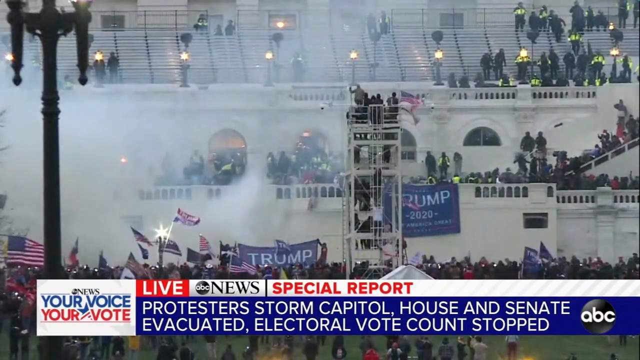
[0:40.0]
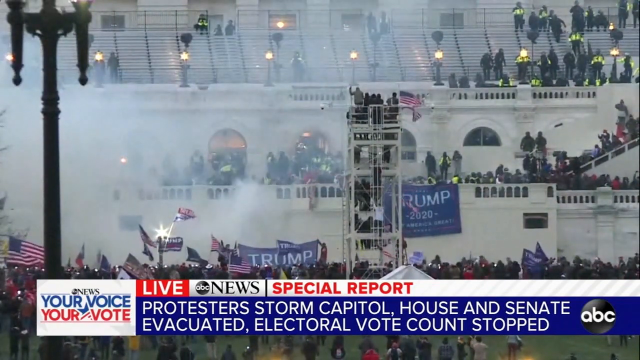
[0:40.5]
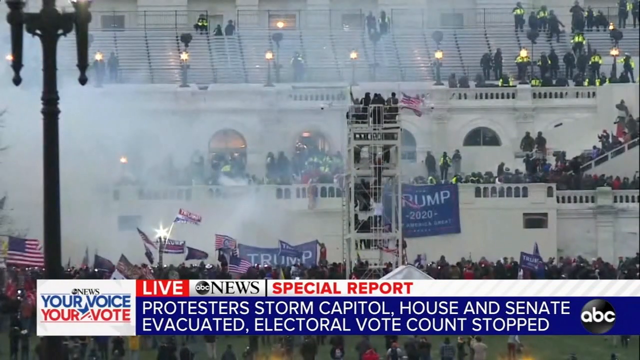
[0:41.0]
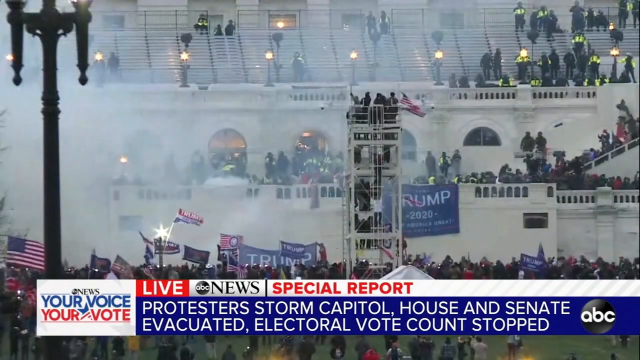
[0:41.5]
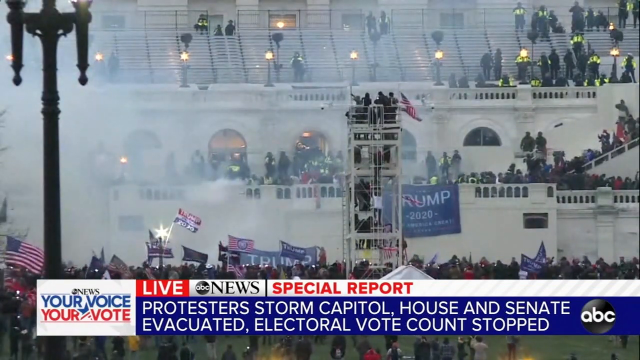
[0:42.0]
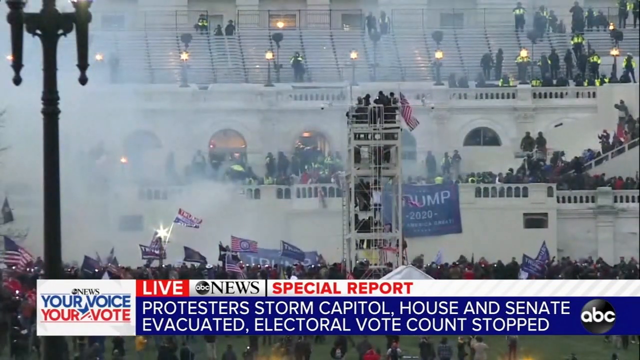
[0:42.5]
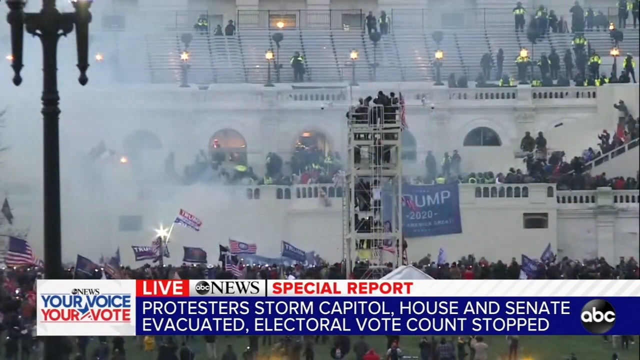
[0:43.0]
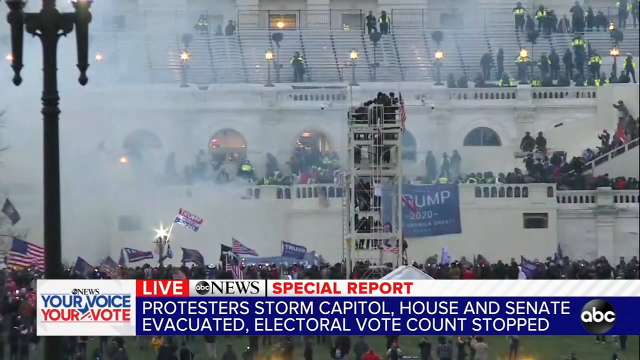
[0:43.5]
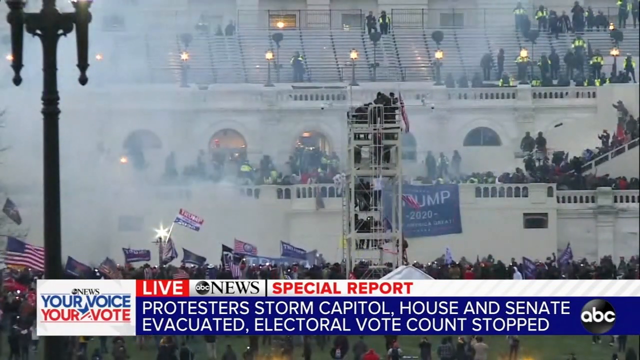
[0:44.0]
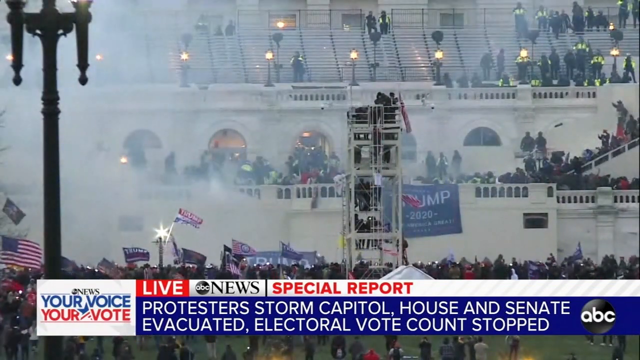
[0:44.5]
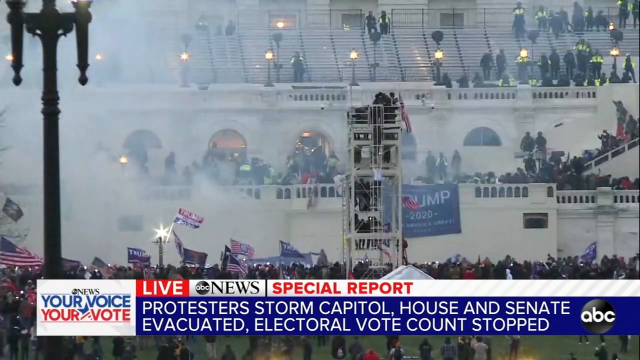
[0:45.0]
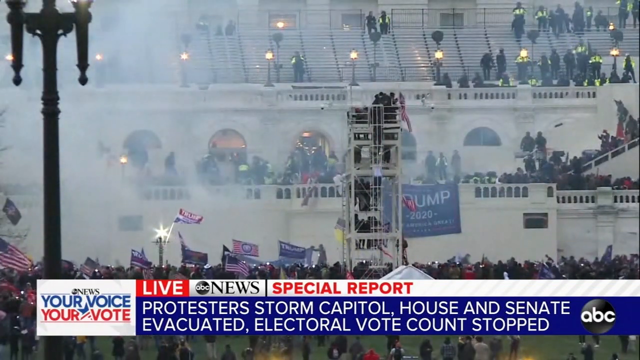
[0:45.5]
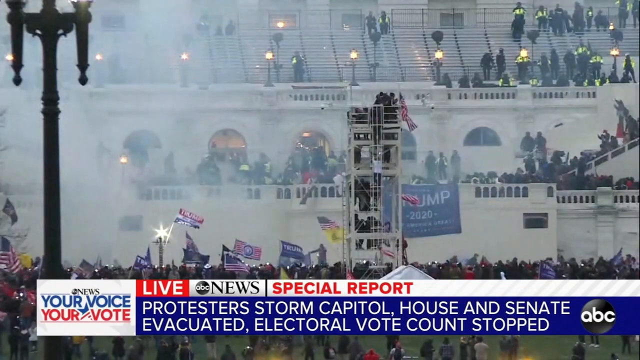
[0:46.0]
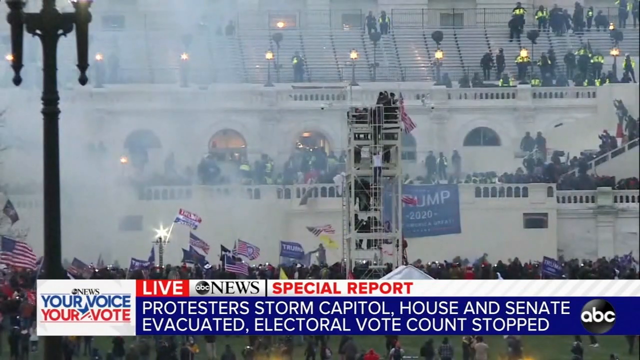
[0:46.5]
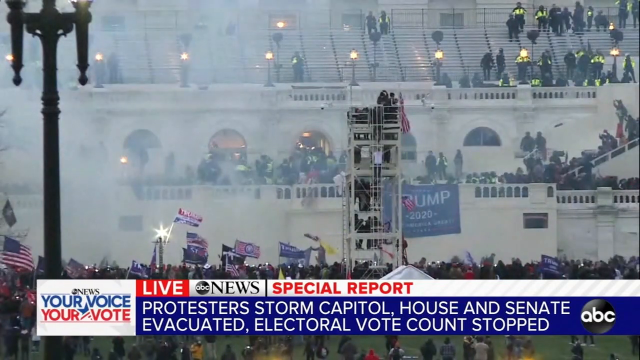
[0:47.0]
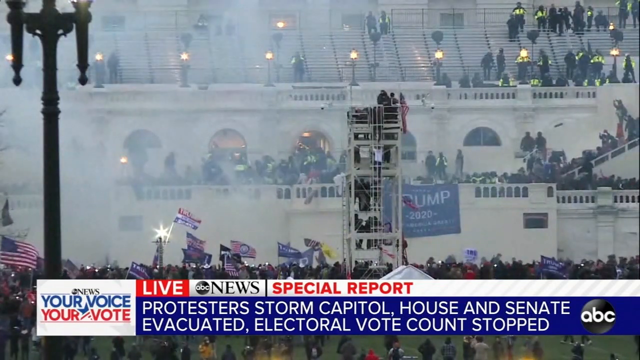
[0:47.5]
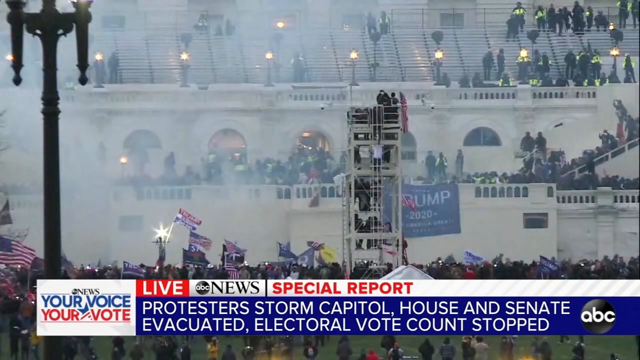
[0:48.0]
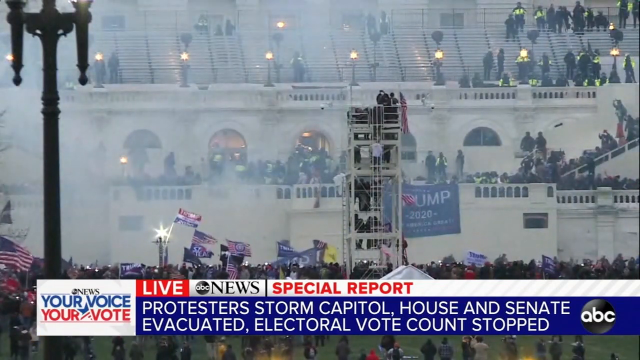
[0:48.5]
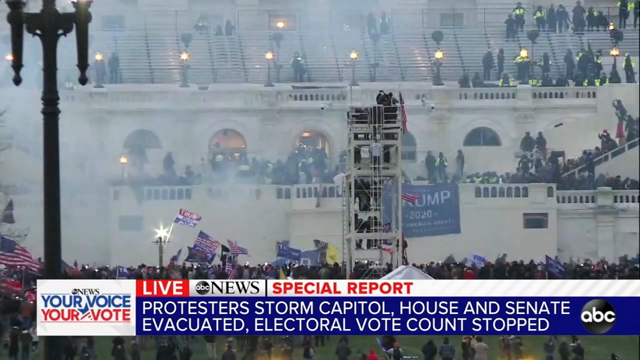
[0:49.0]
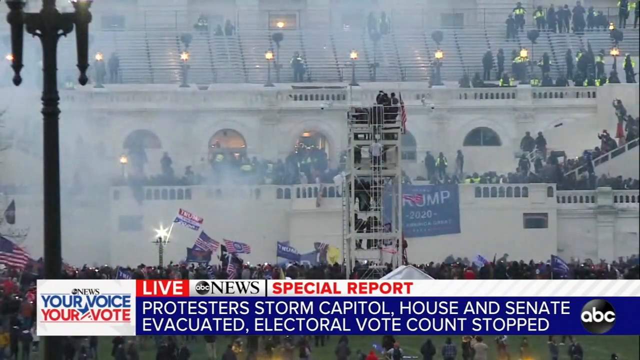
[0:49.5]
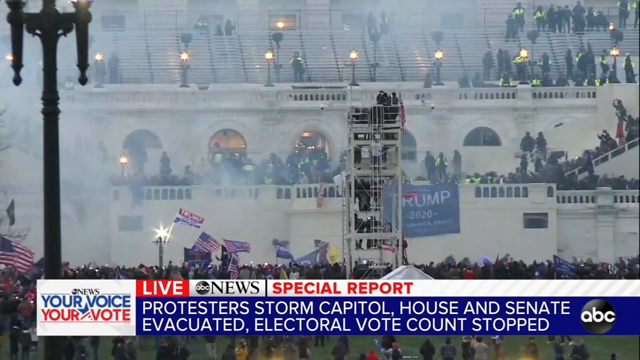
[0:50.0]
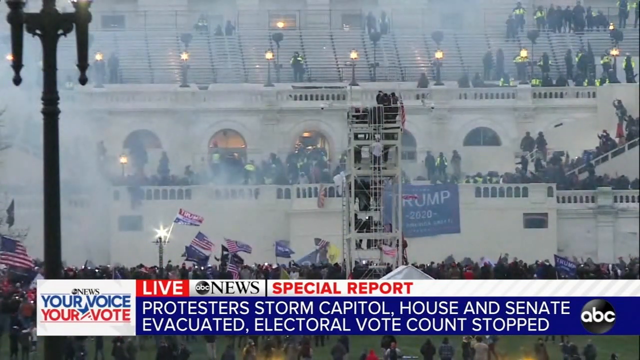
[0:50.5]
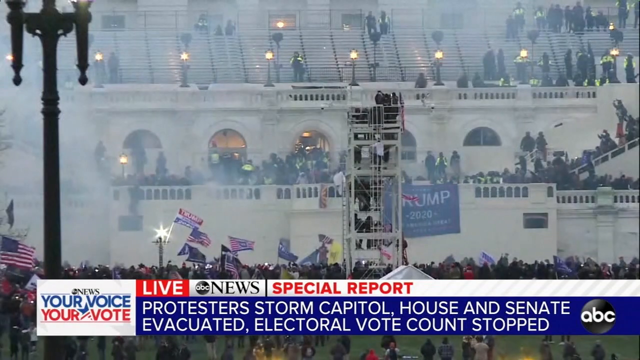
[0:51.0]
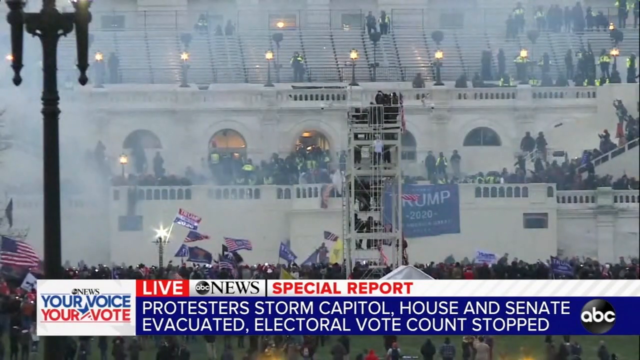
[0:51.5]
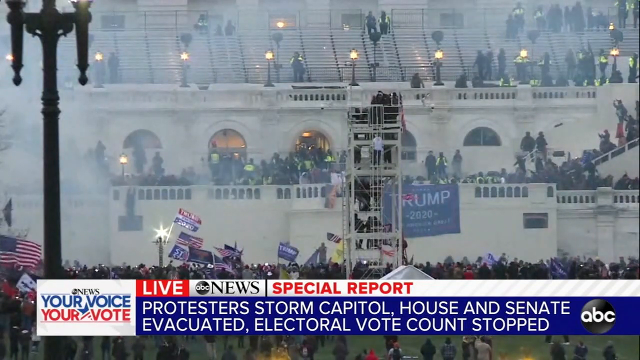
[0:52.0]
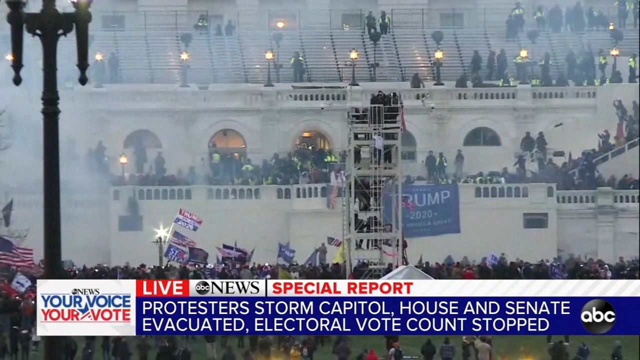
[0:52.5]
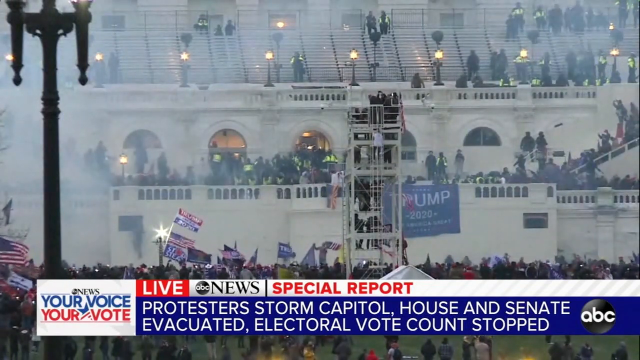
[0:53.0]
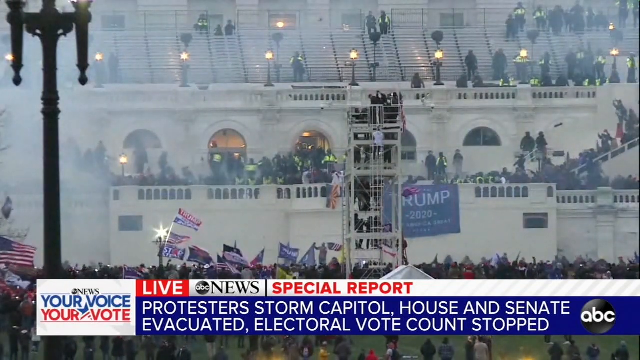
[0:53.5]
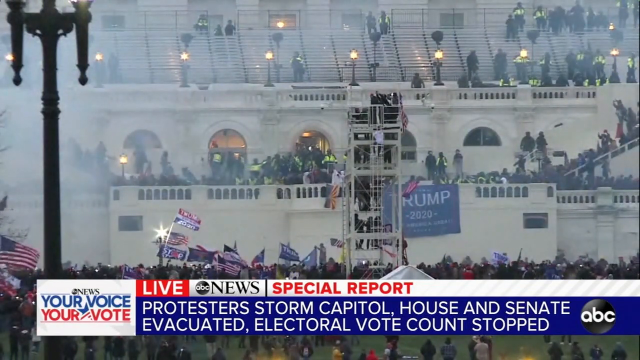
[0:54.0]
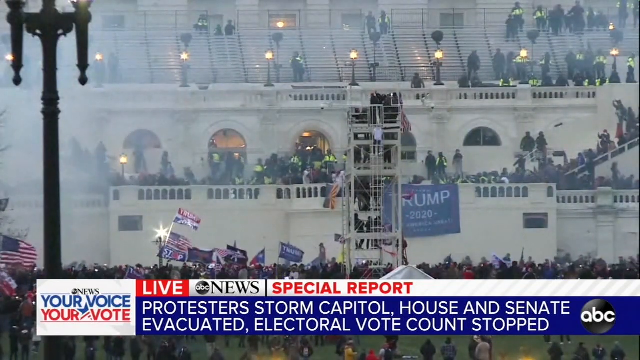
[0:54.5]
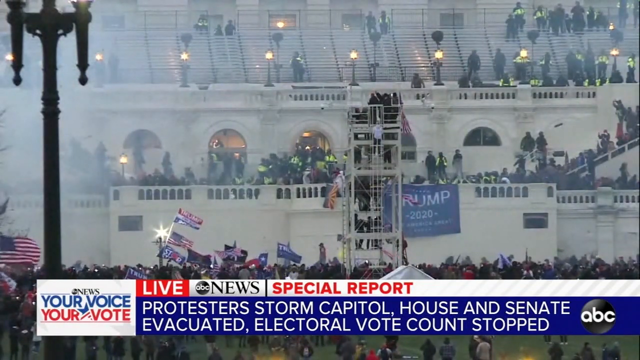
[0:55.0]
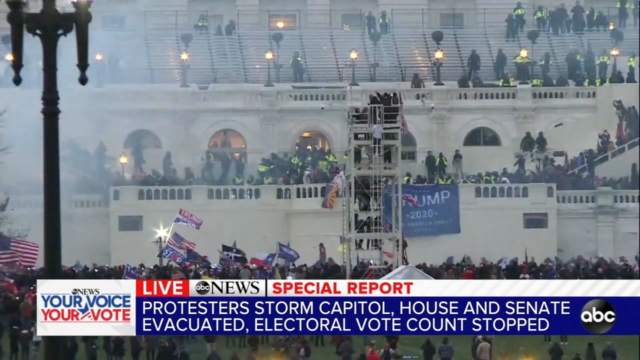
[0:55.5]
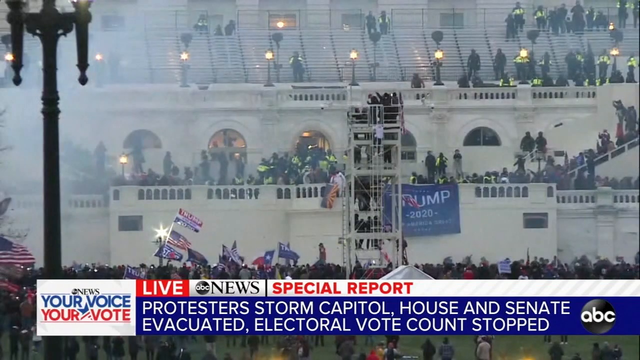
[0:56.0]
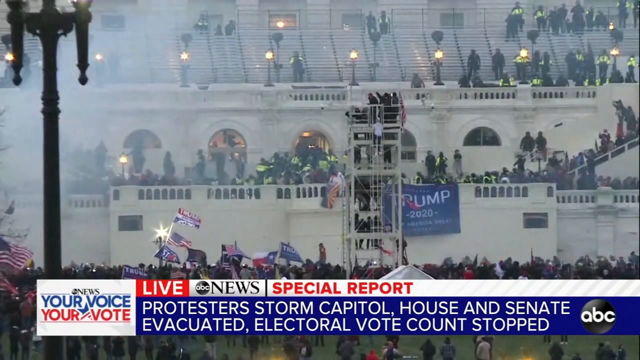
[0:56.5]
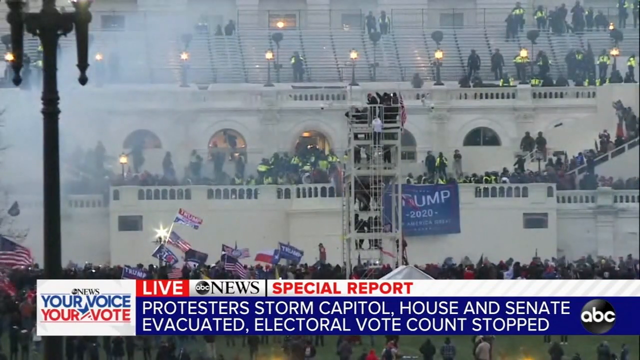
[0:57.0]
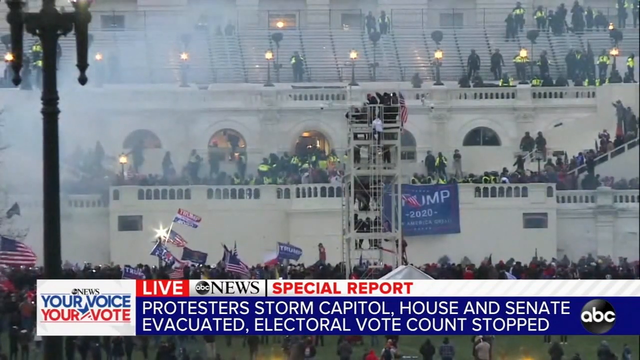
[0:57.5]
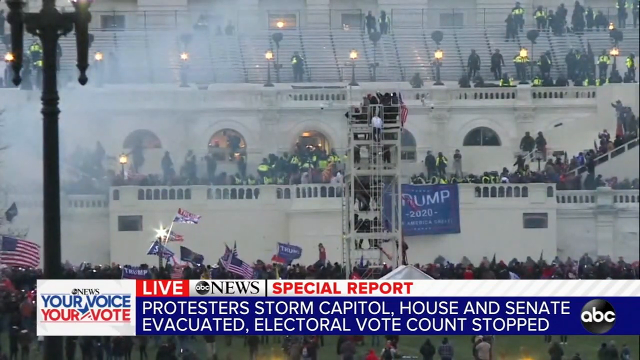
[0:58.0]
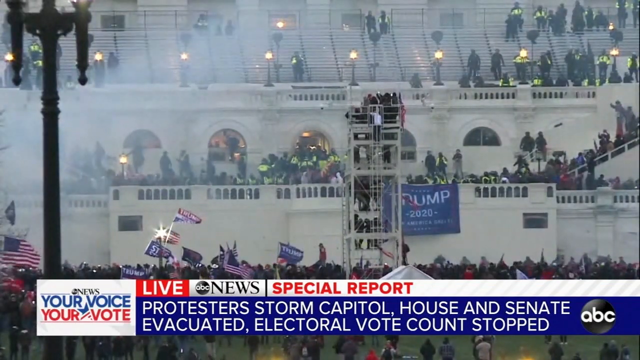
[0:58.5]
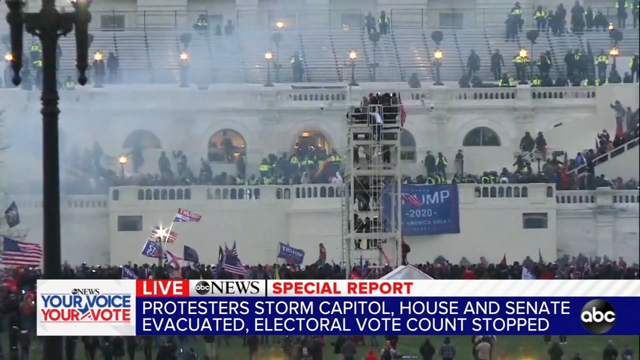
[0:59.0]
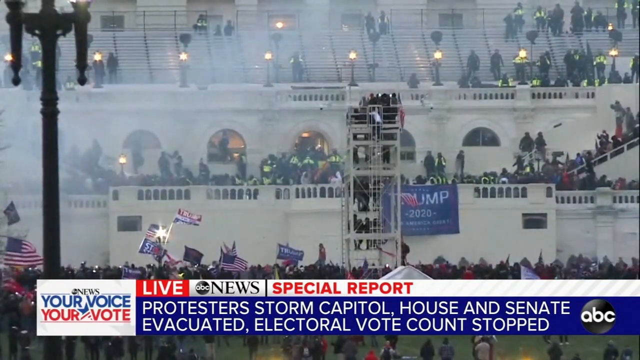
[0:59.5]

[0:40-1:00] Protesters hold their flags high, while others hold a different flag. Police are also in the field. A drum is shown. The report is from the Voice News. People remain outside holding their flags high, while others forcefully go inside the building. Police try to stop them from getting inside, but people continue forcing their way in.